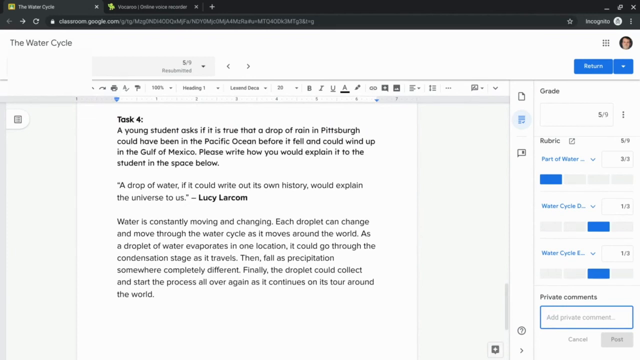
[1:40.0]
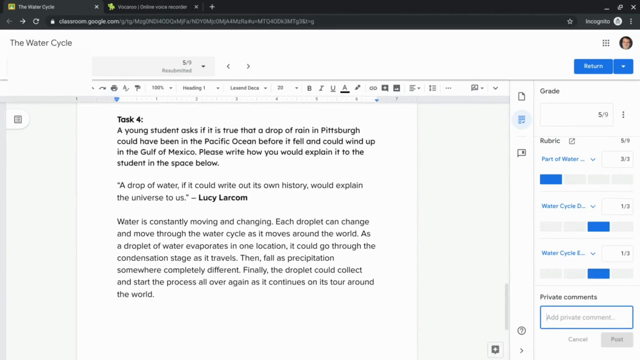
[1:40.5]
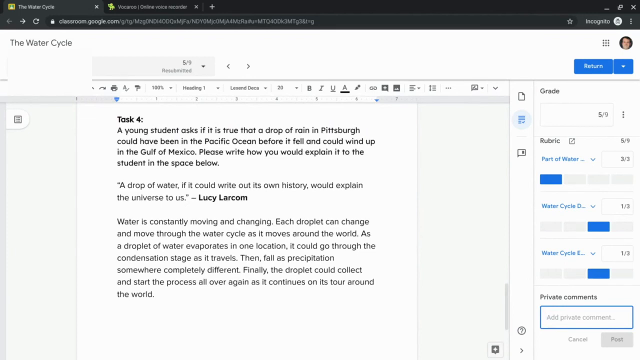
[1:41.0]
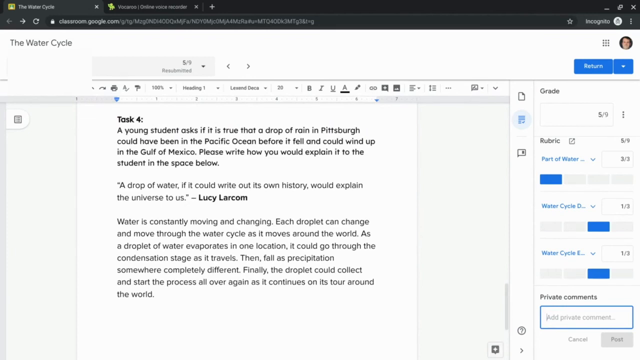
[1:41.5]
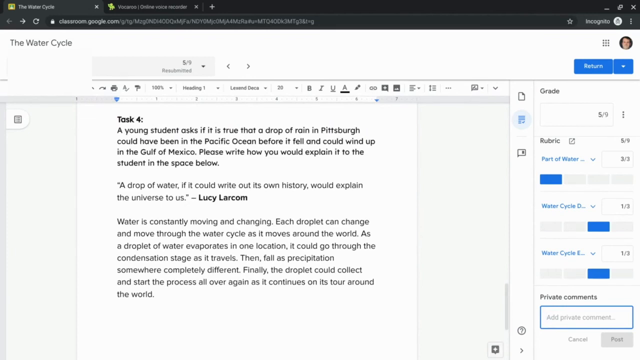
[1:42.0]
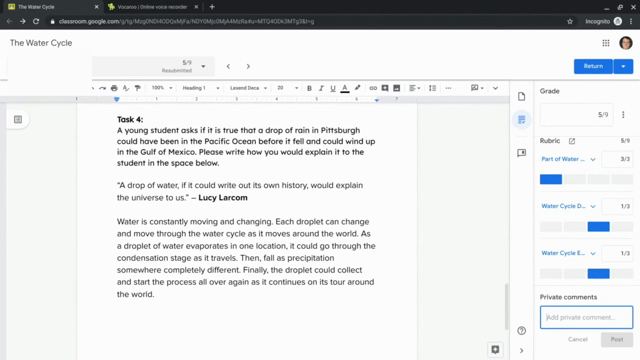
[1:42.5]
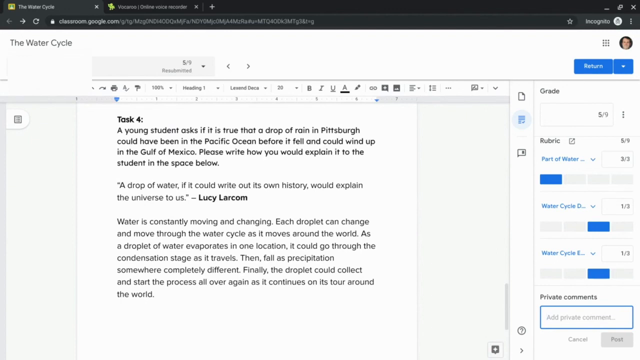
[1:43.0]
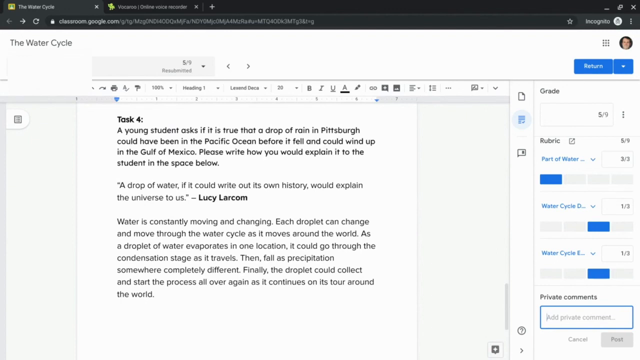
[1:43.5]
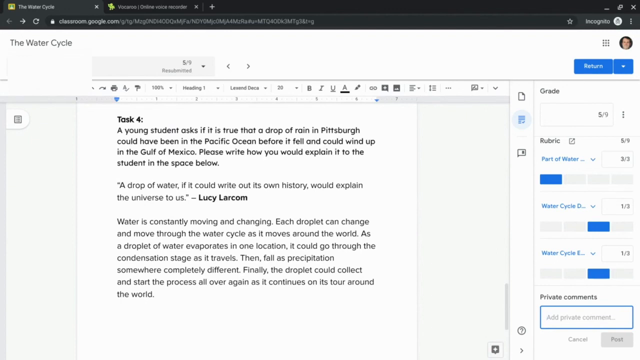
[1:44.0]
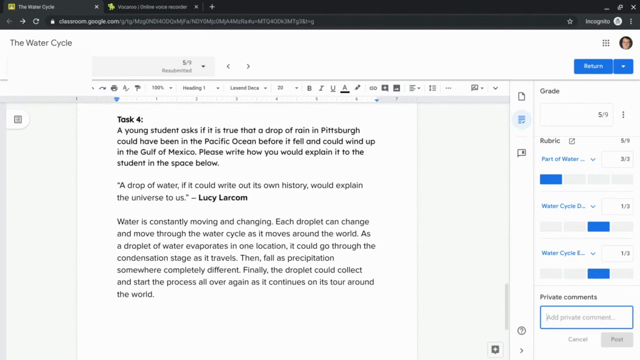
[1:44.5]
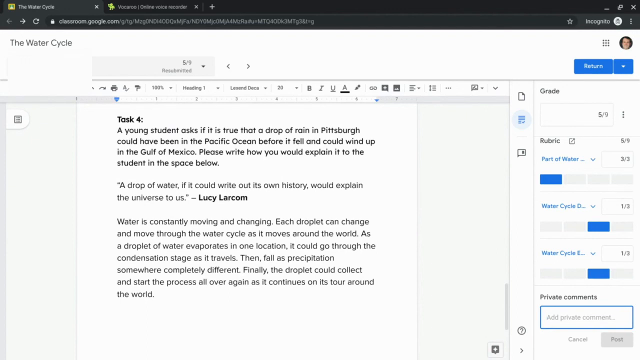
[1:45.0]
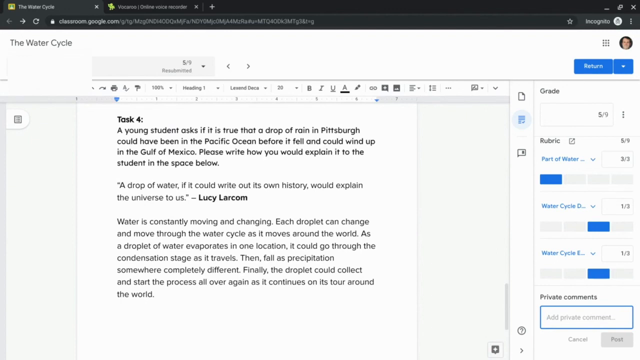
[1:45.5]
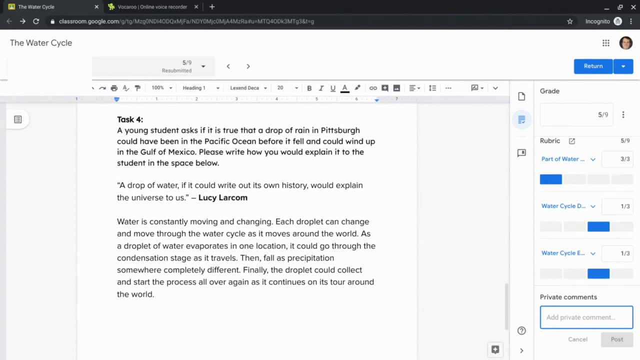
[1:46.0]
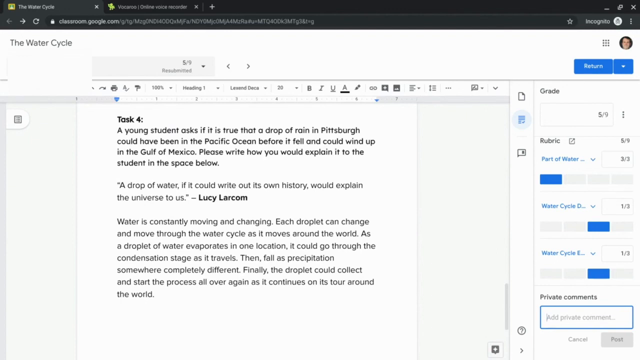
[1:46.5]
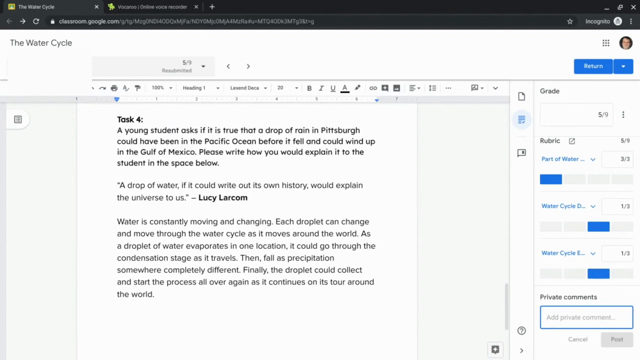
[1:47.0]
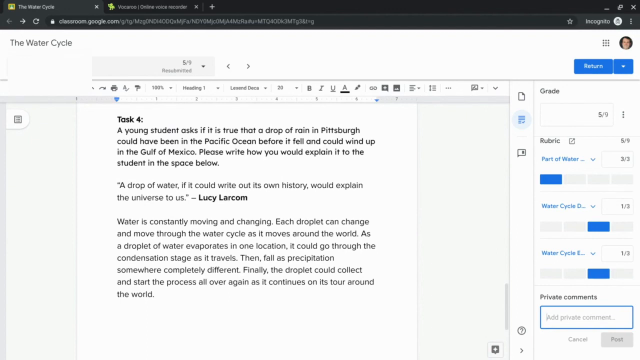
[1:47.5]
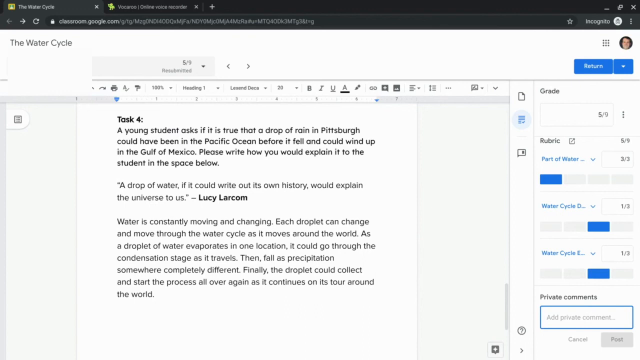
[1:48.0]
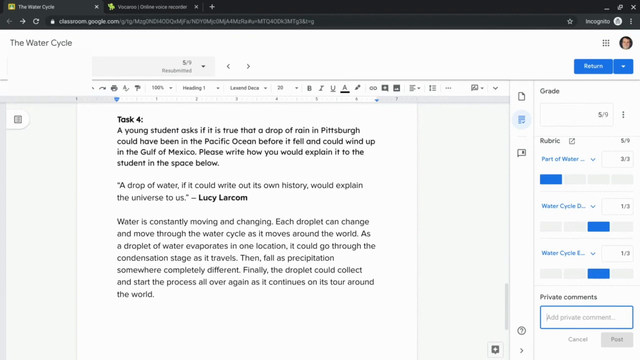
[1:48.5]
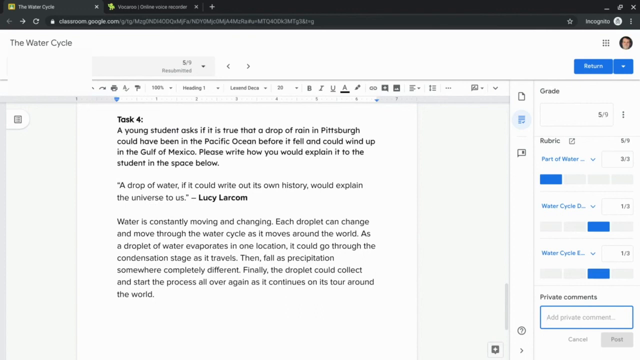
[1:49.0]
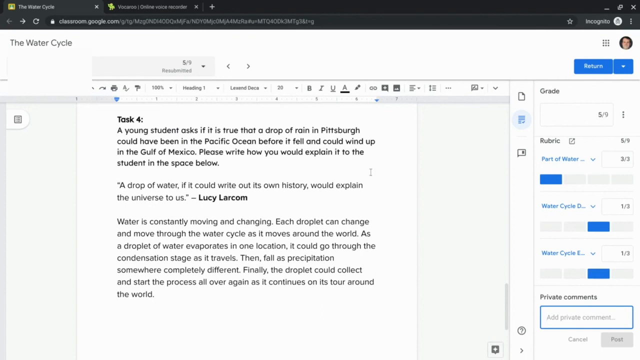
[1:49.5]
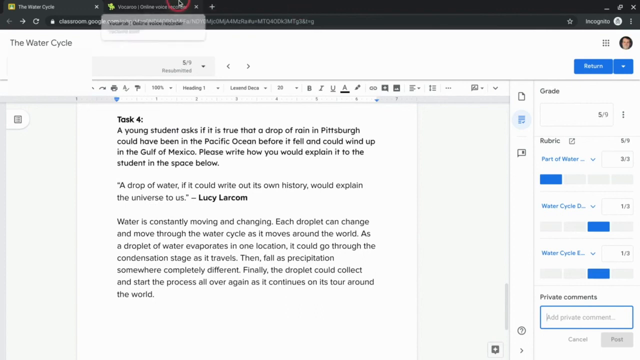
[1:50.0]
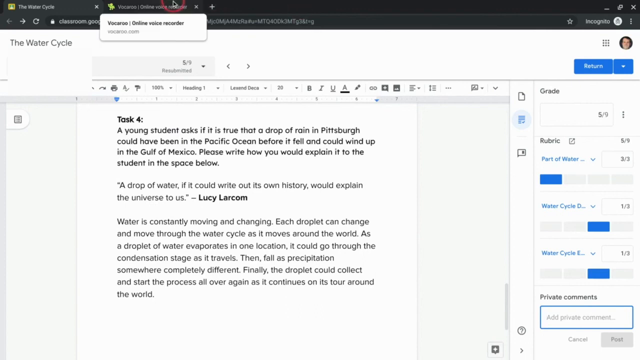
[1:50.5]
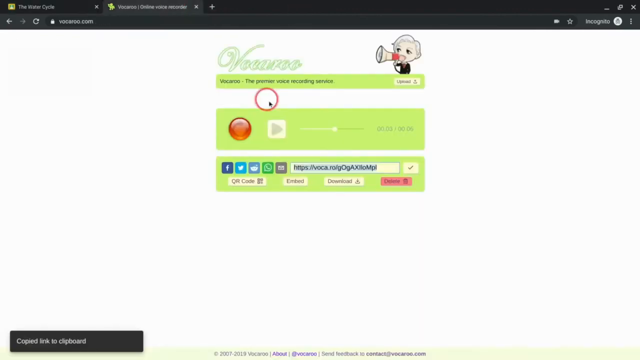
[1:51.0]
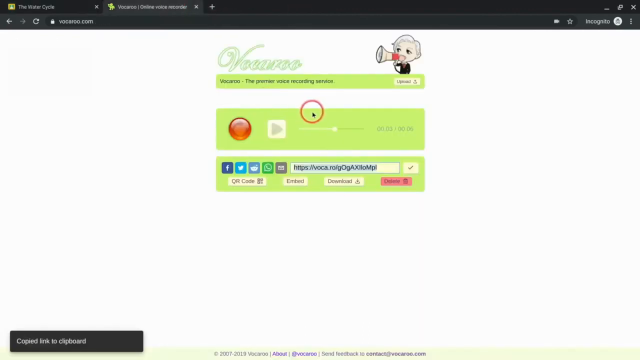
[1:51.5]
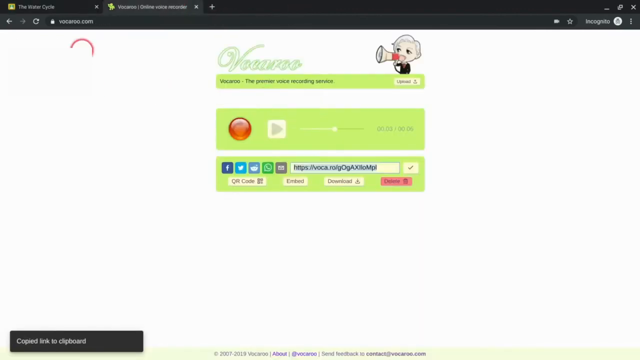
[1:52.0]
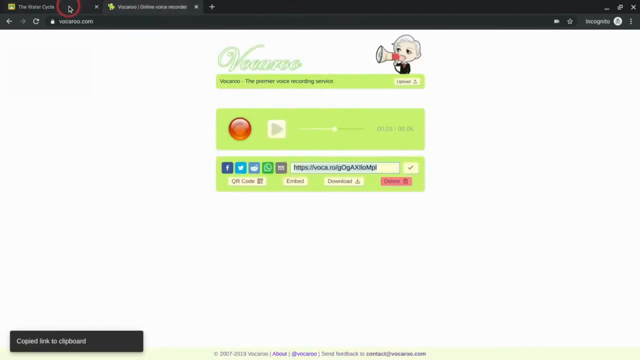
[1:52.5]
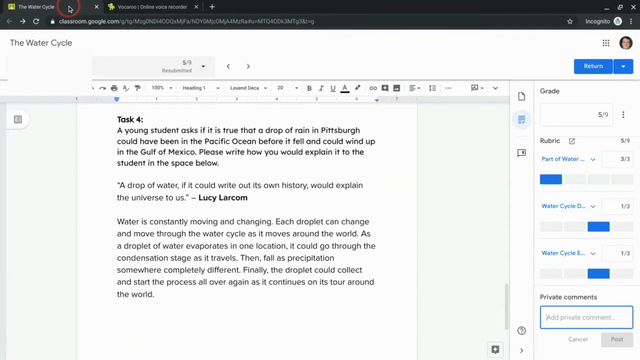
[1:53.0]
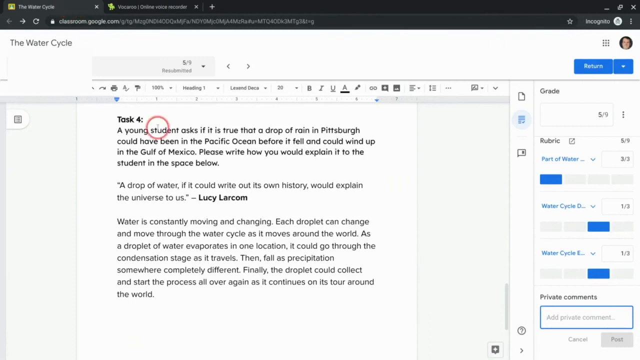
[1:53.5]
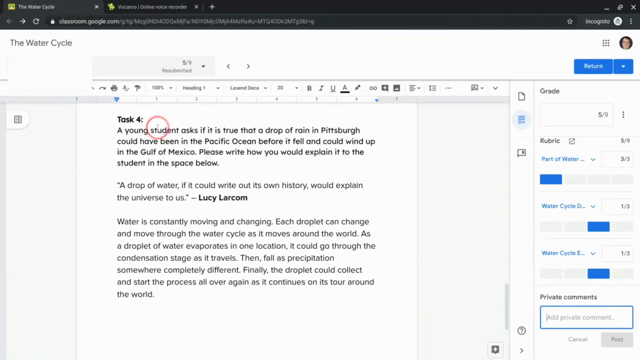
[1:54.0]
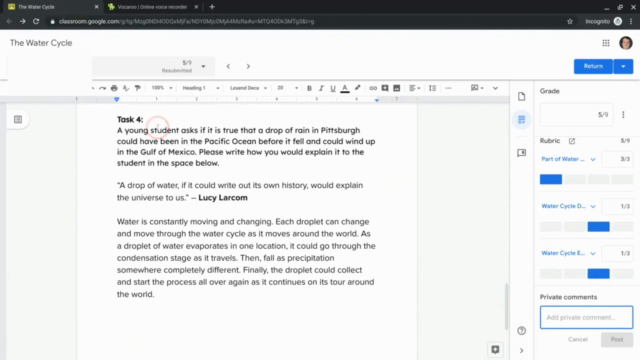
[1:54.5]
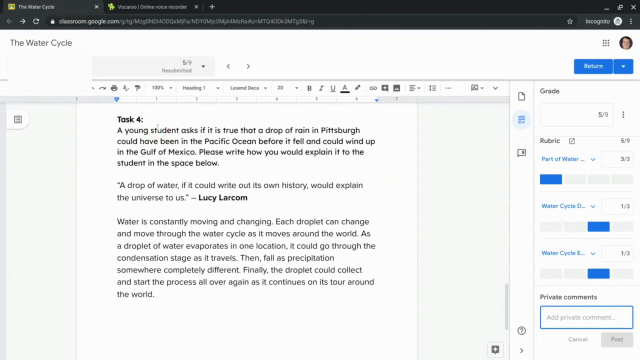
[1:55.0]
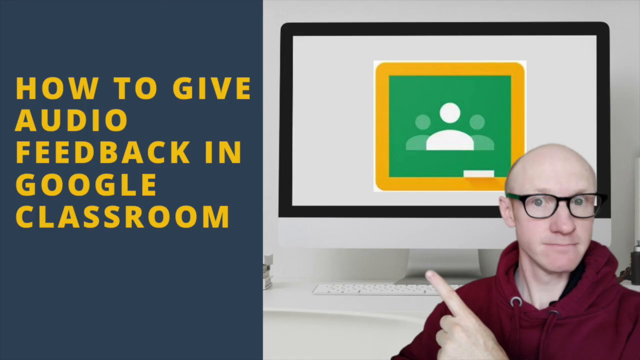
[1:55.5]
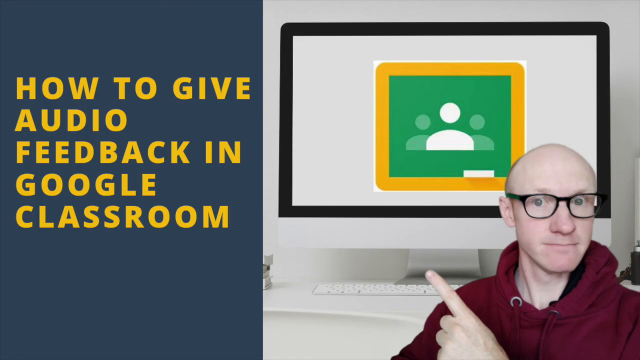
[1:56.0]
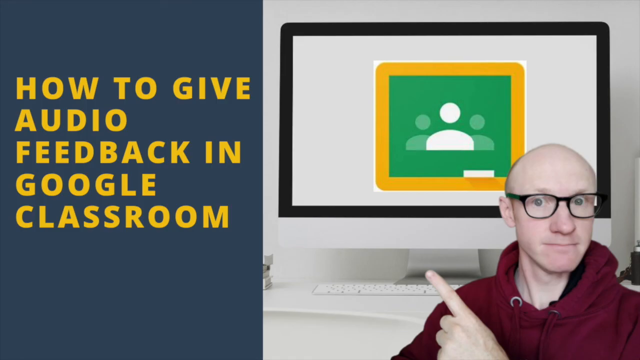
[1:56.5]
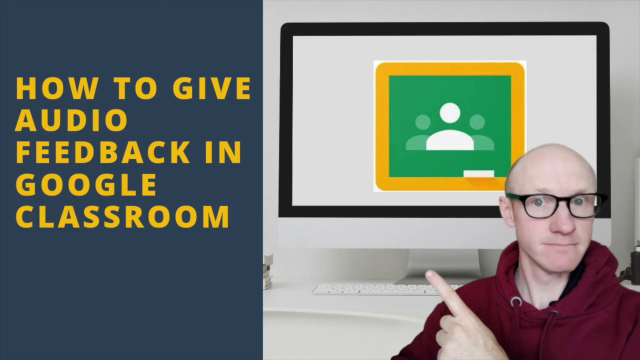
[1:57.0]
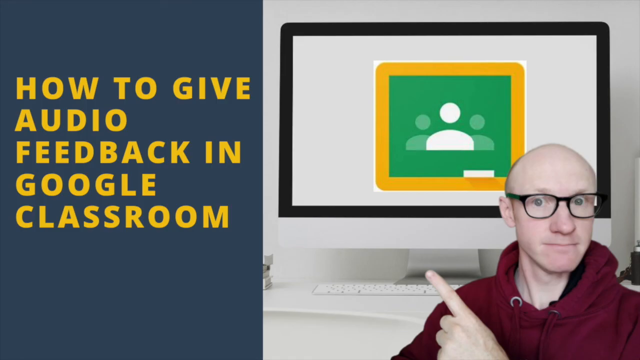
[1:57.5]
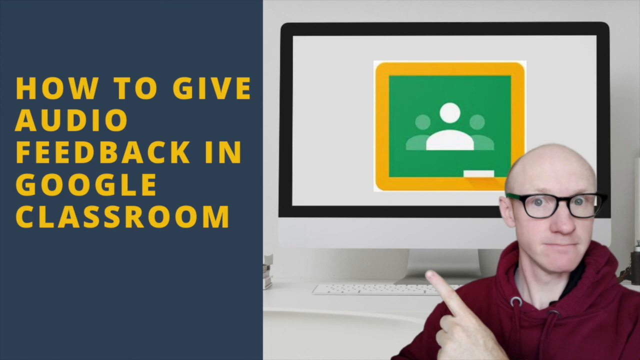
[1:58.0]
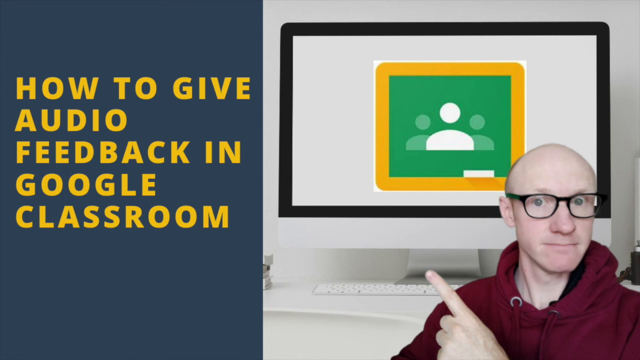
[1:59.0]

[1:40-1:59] The document editor is shown at the section that reads "Task 4" with its paragraph. The mouse hovers around, moving in a circle-like motion, then moves to the top of the browser and clicks the tab with the other website. The website is shown briefly before the mouse clicks back to the document editor. It goes over the Task 4 section and hovers, and then the video quickly transitions to the opening image: the bald man pointing at the computer screen with the green and yellow icon, with text on the left side reading "how to give audio feedback in Google Classroom." The man wears a hoodie, and the computer screen looks like a Mac or Apple computer. The video ends with this screen remaining.